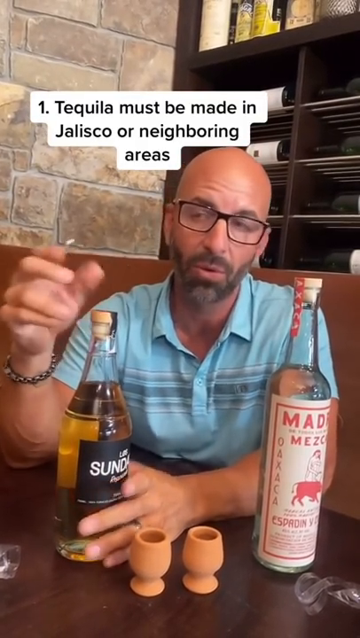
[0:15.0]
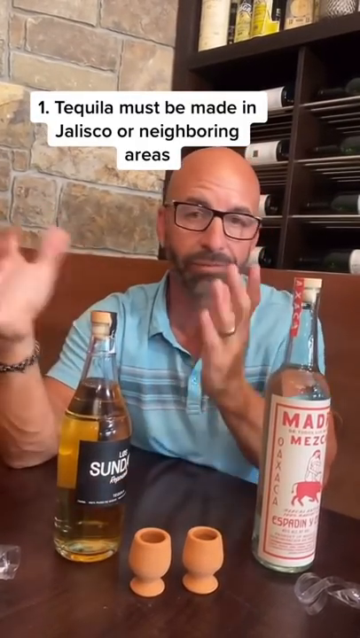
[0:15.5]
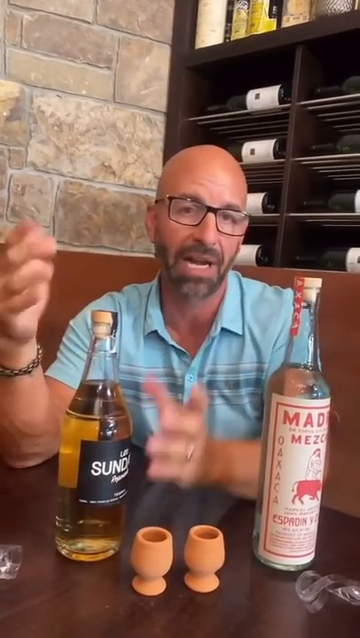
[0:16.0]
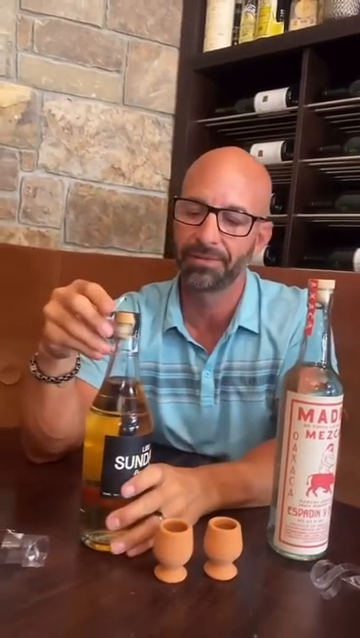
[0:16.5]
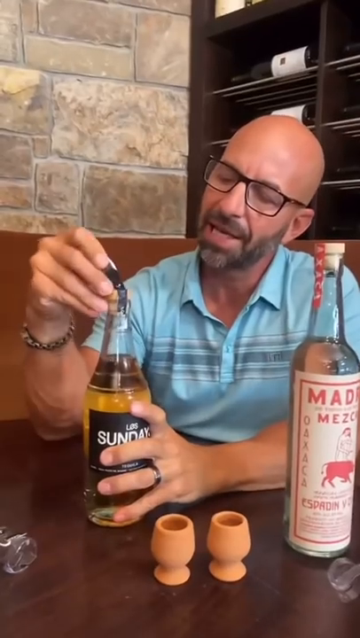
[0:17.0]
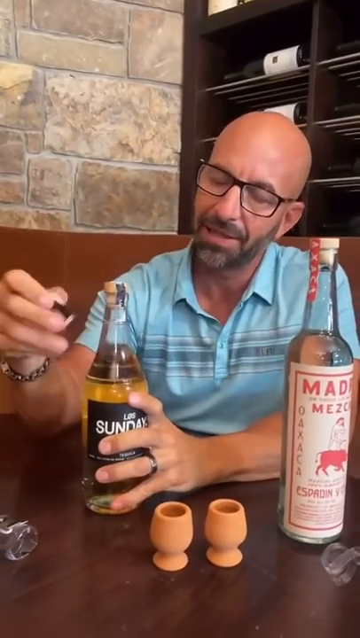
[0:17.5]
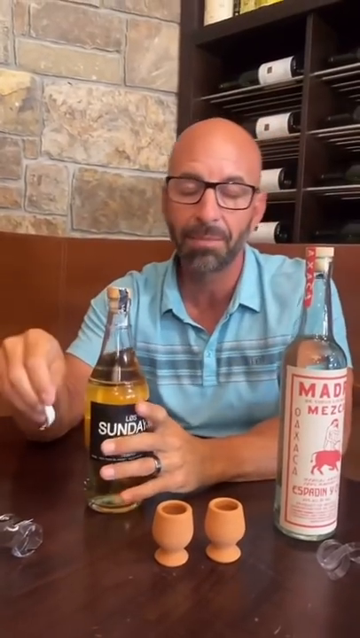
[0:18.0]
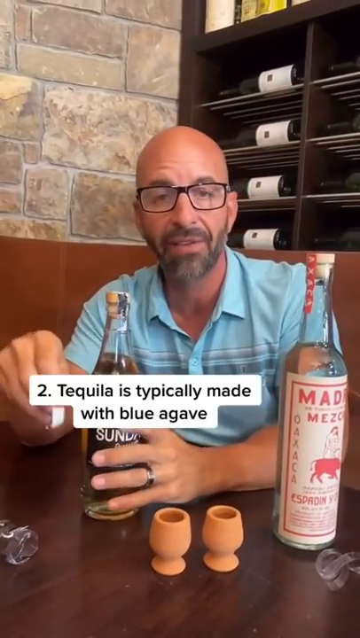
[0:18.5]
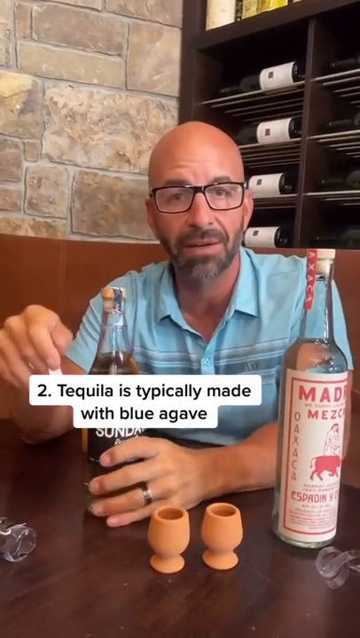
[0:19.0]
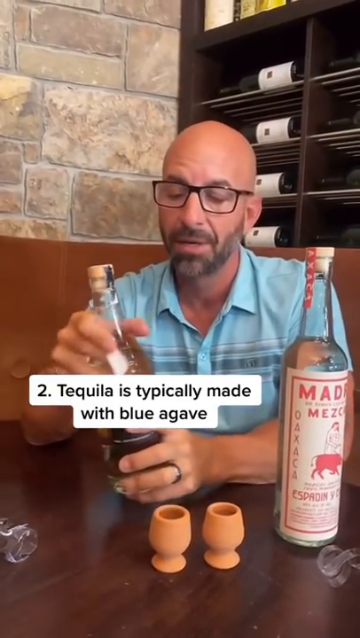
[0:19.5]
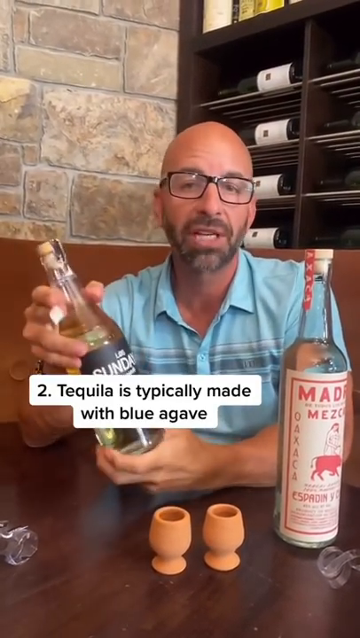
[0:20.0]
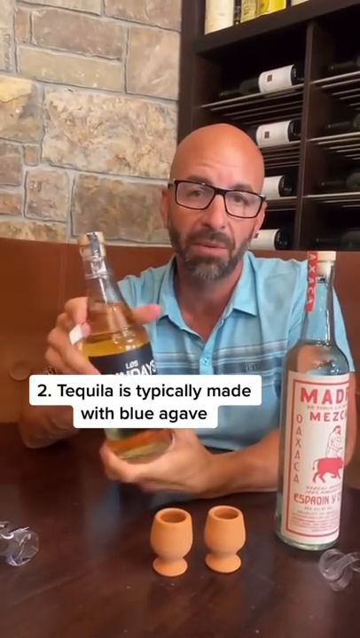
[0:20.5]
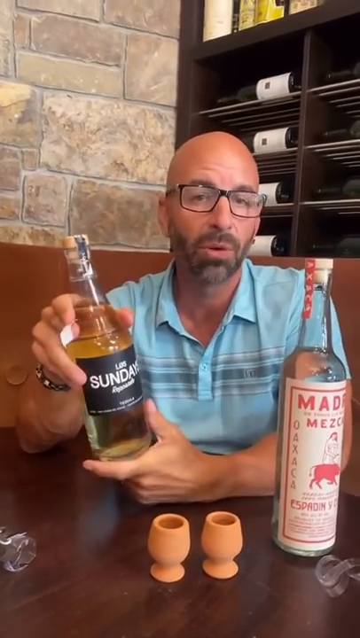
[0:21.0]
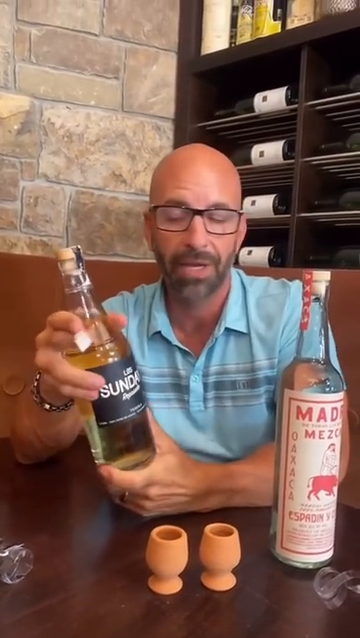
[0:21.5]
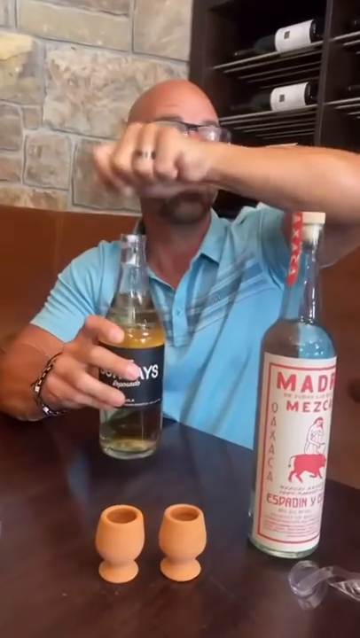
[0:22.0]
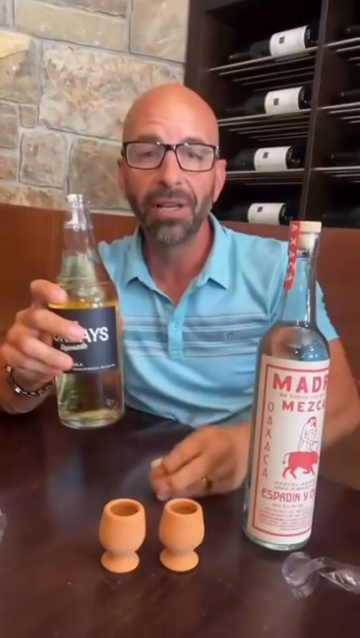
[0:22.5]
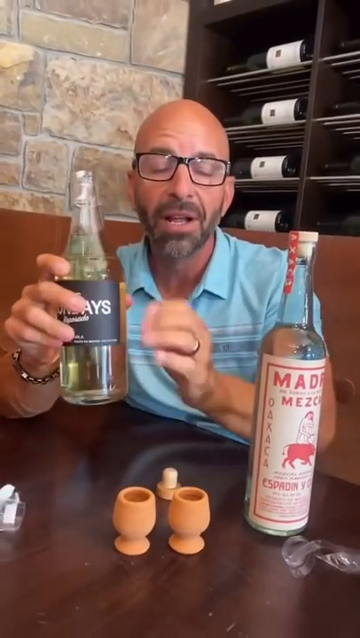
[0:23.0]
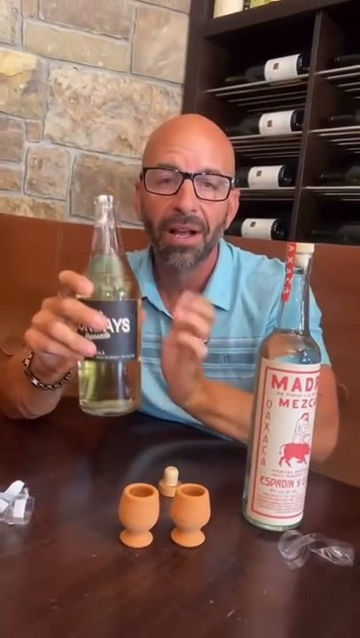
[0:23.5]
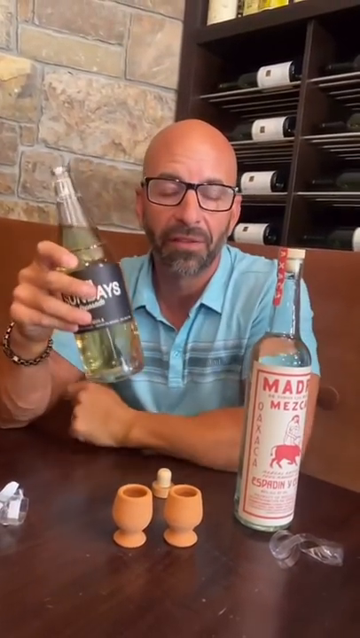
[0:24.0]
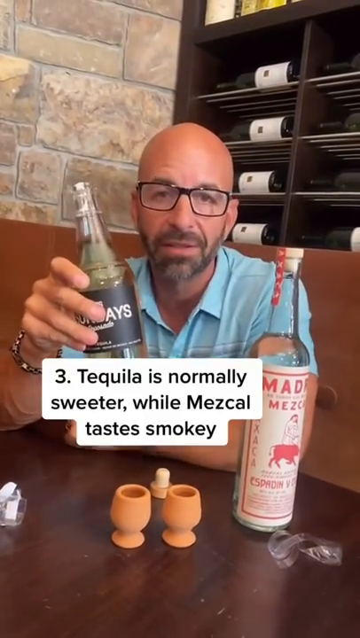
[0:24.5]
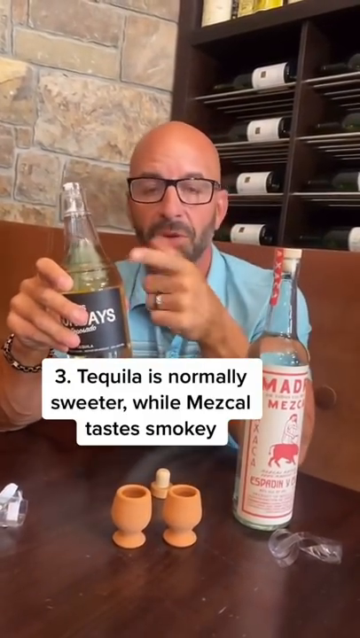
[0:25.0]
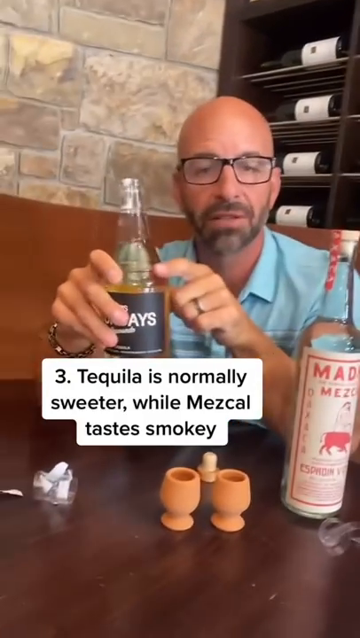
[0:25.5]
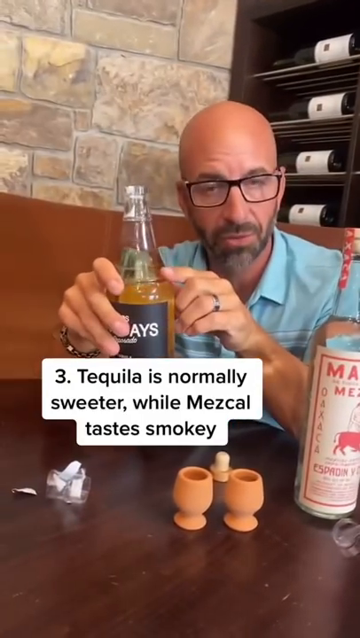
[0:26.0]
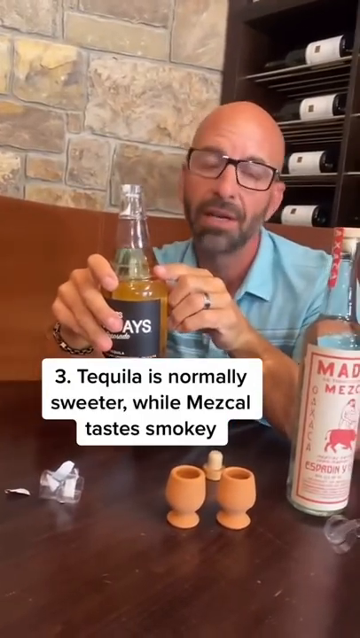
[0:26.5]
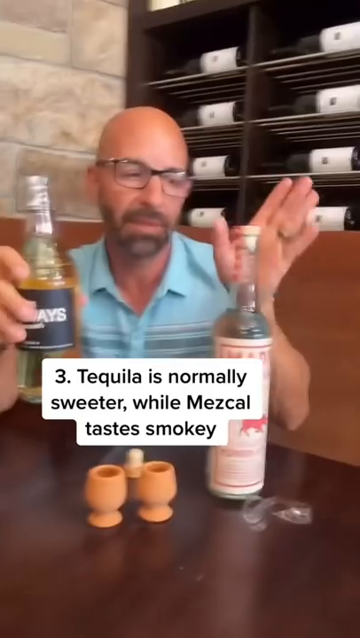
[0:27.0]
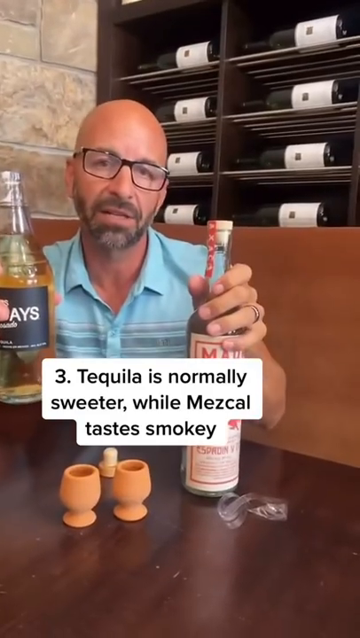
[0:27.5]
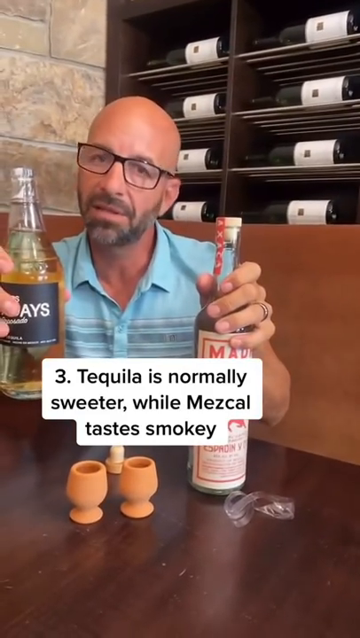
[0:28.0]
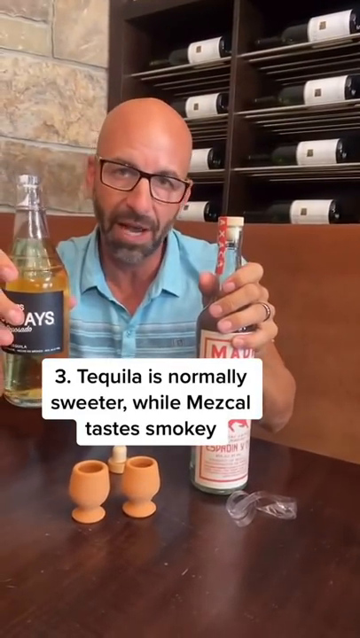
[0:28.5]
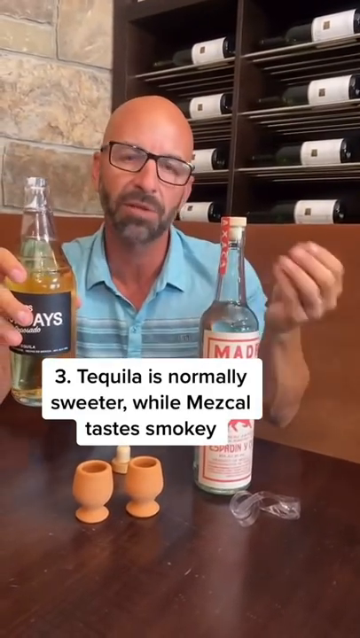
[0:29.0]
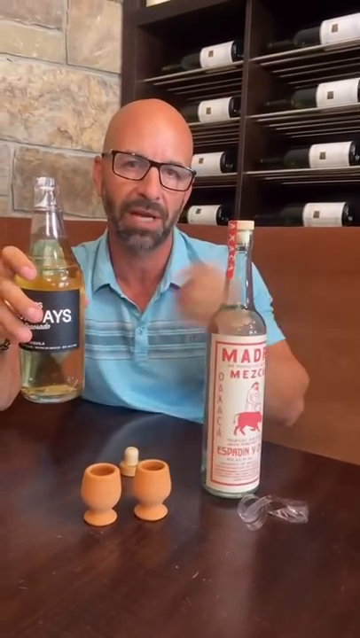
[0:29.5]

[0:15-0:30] The bald man with glasses, a beard and a blue shirt sits in the corner booth with the mescal and tequila in front of him. There are wine bottles in the back. He talks to the camera. A caption appears where he says that tequila is typically made with blue agave. He also says tequila is normally sweeter than mescal, which tastes smoky. Meanwhile, he seems to be getting ready to pour some of the tequila into one of the small glasses in front of him: he taps the bottle a couple of times, points at it, and pulls the lid off completely.